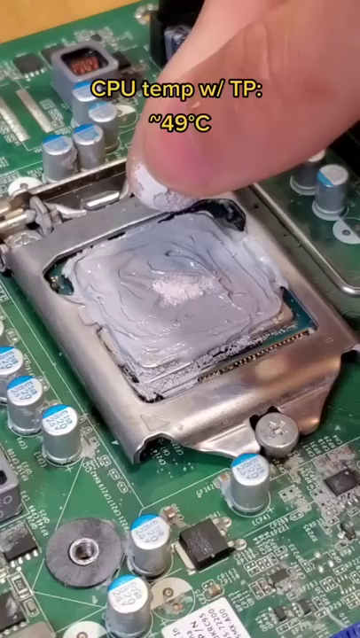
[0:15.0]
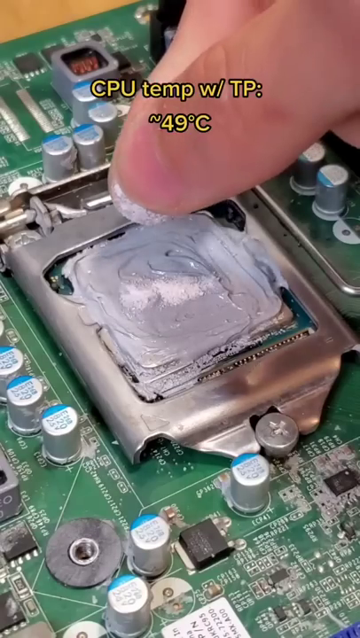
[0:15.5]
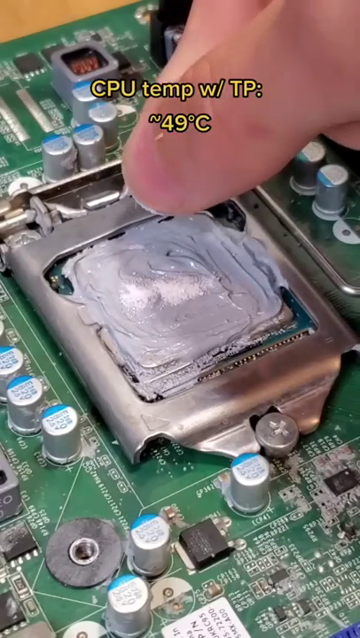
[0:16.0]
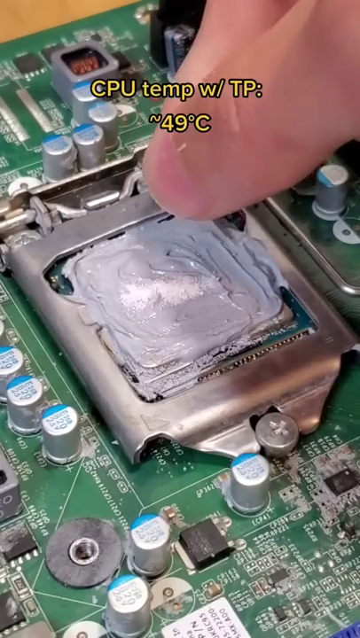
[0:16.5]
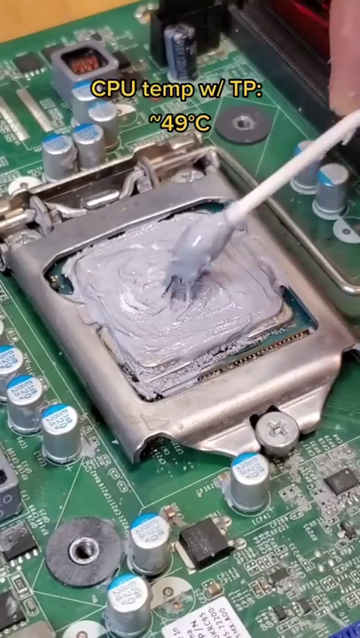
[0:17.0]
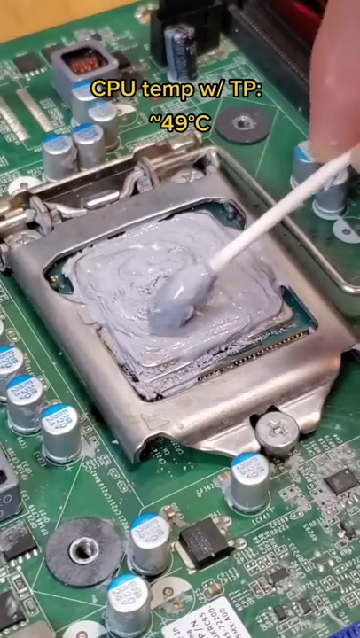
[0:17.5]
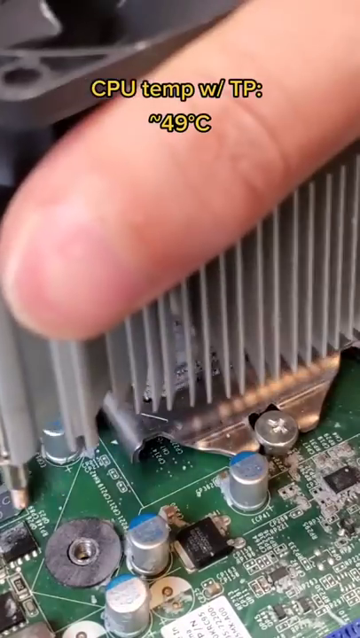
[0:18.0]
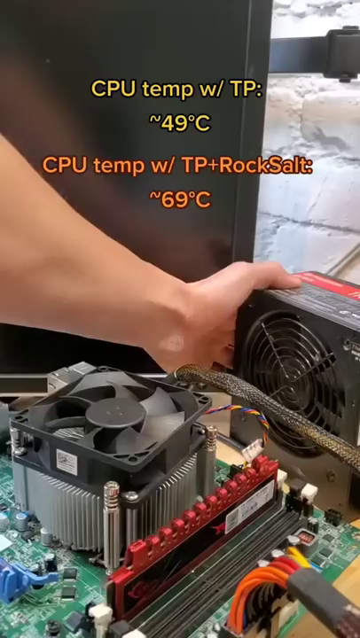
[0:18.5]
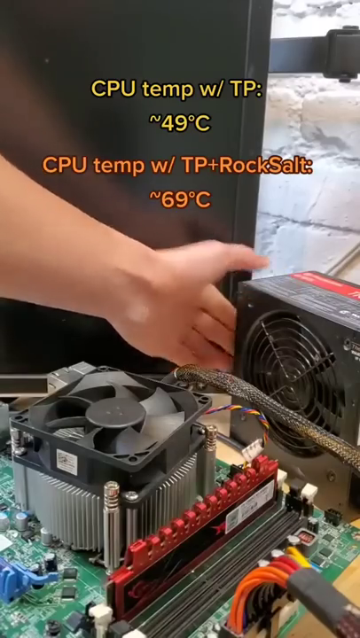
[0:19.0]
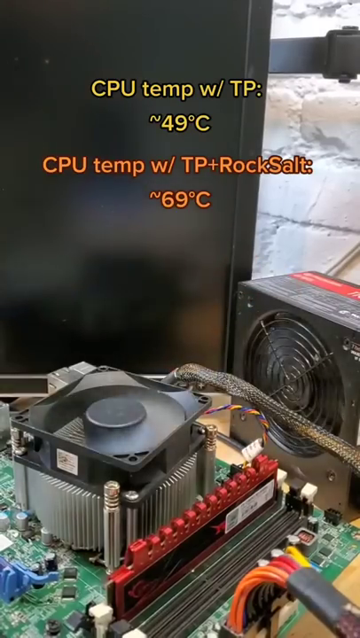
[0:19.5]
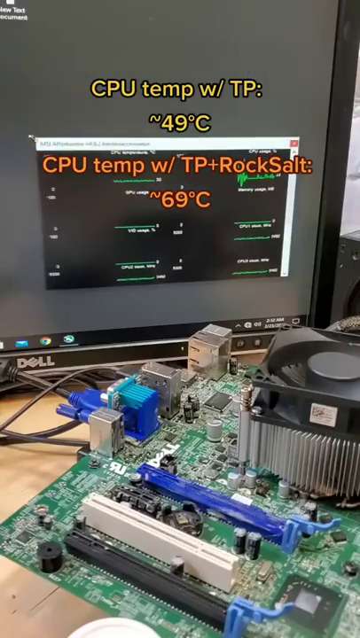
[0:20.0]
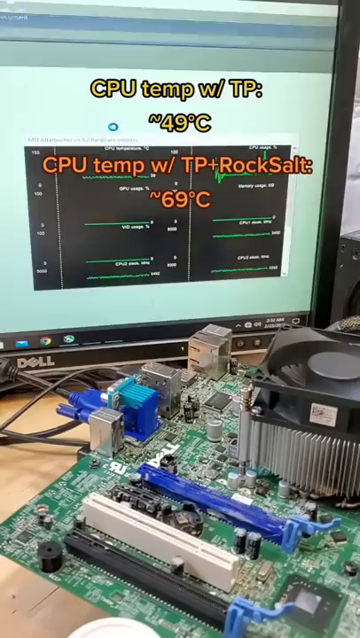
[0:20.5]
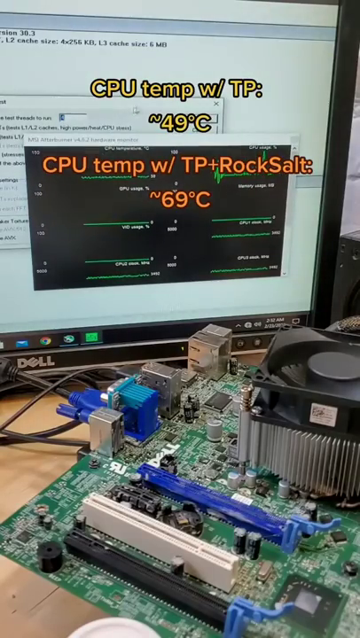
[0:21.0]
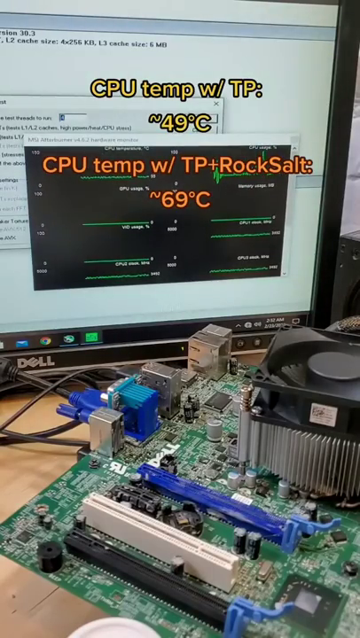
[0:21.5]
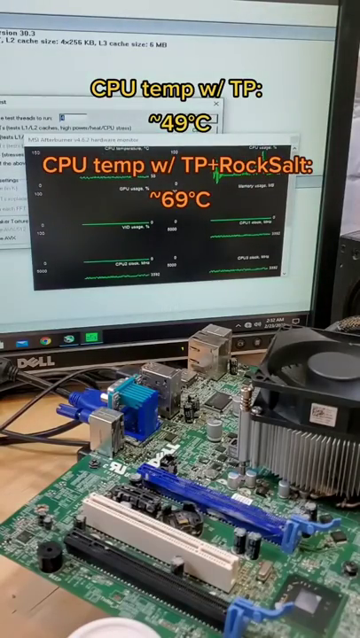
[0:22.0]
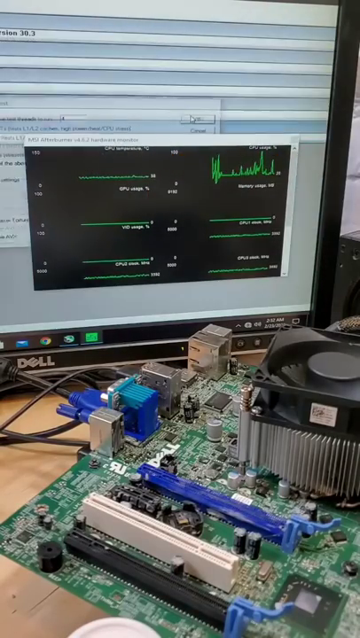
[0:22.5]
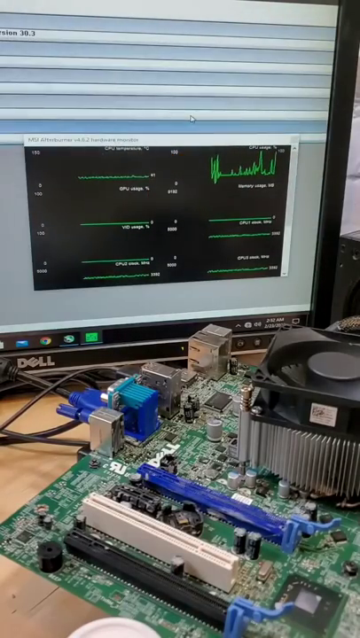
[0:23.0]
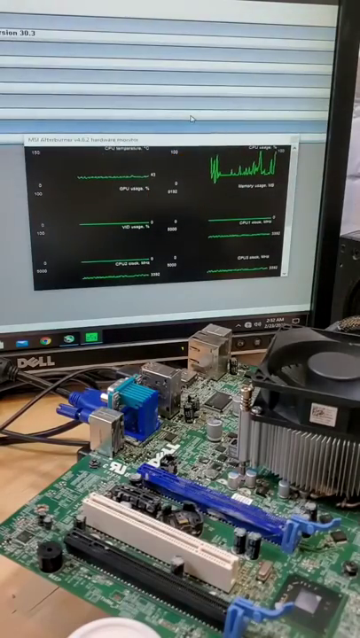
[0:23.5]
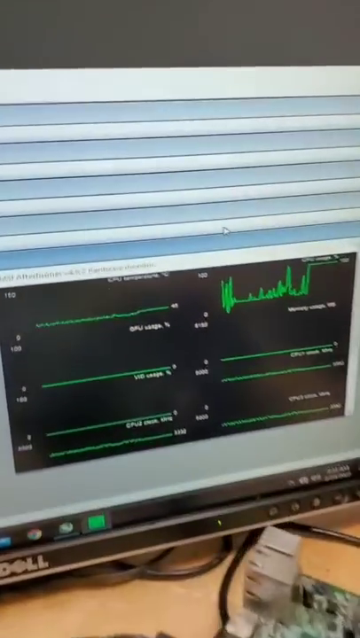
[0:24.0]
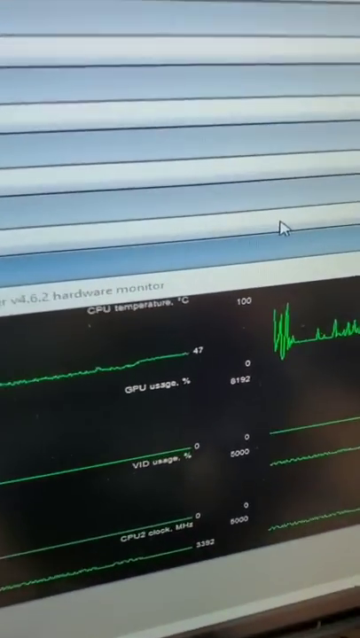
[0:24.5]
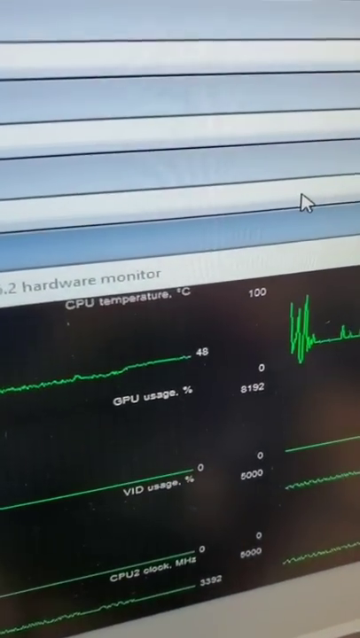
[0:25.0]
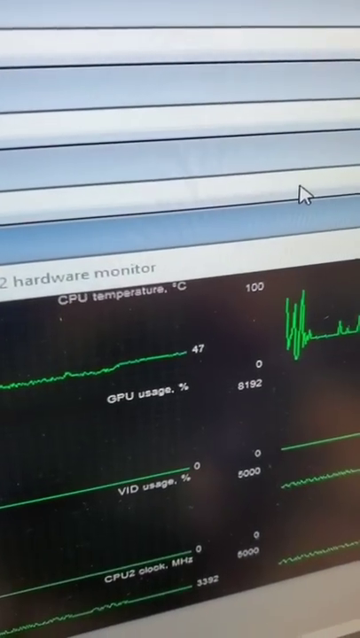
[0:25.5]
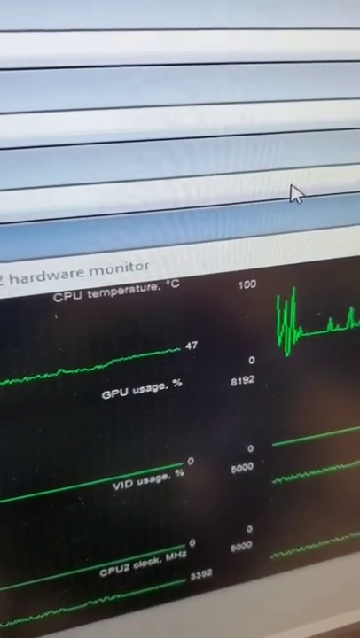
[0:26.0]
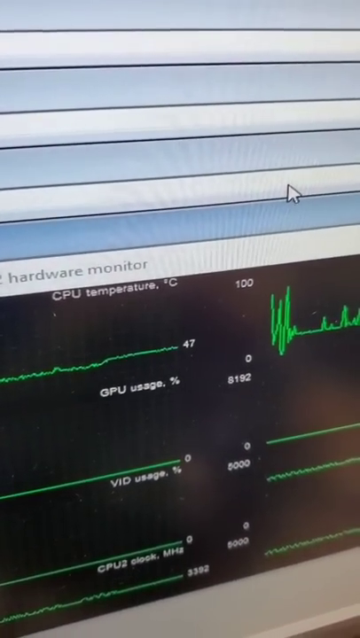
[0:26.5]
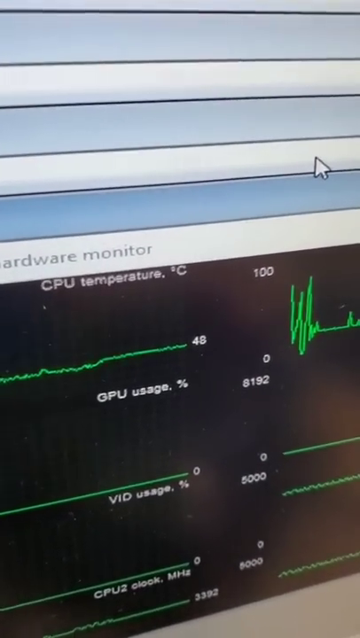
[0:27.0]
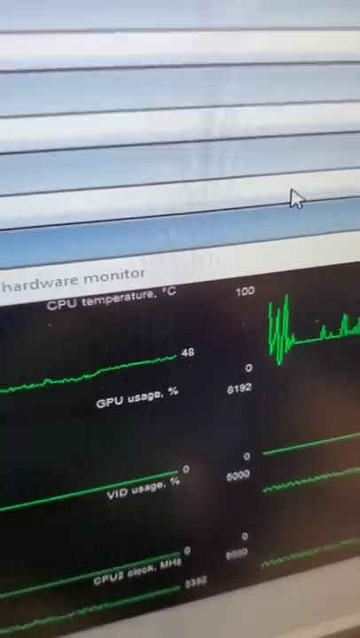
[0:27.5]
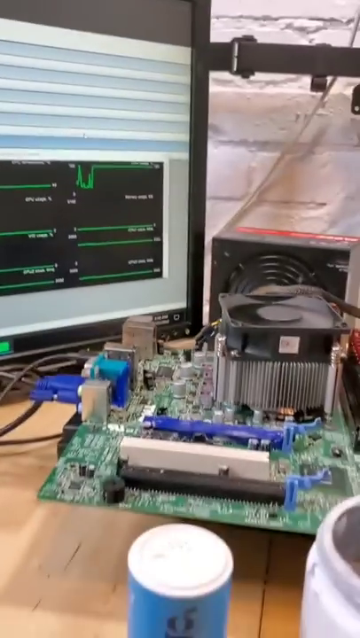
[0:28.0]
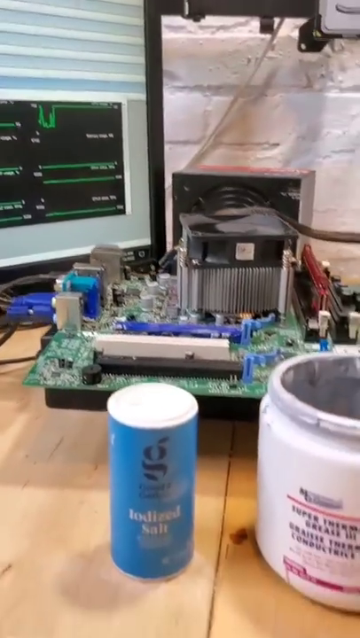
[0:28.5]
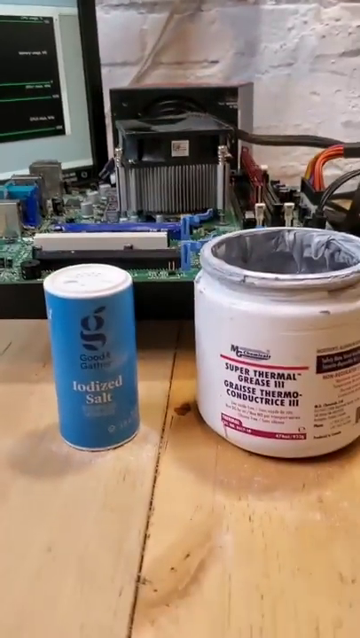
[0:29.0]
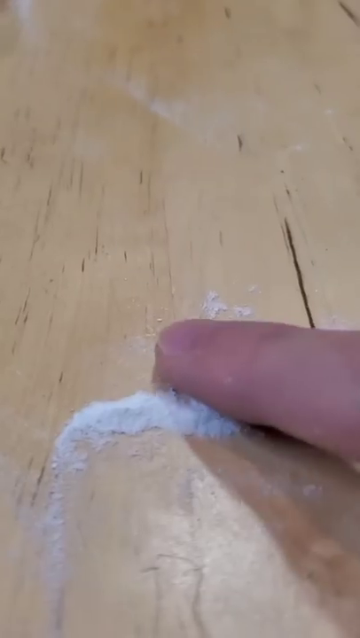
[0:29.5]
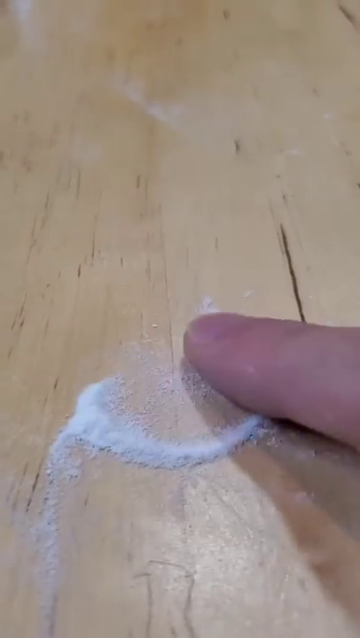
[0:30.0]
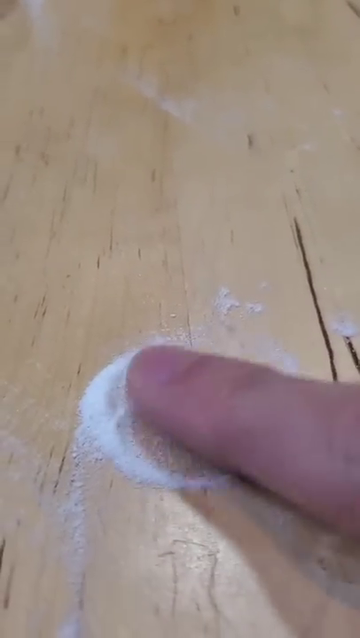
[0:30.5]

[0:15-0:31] Ground-up table salt is applied into thermal paste on a CPU. Above the CPU, bold text reads "CPU temp 49 degrees Celsius" with TP, meaning thermal paste. The fan is re-socketed and the computer is turned on, and data pops up below in orange stating that with the salt TP mixture it is now at 69 degrees Celsius, running hotter. A monitor shows a black screen with various green line graphs of the CPU's usage and temperature while it runs.